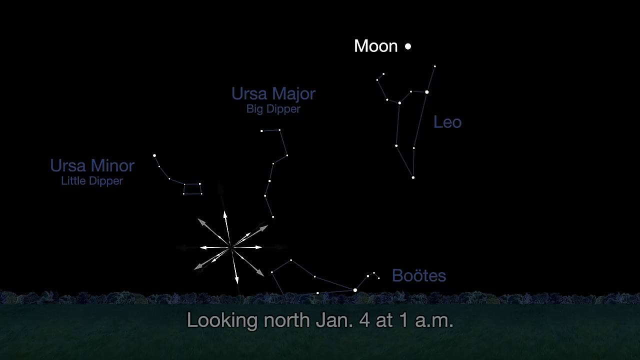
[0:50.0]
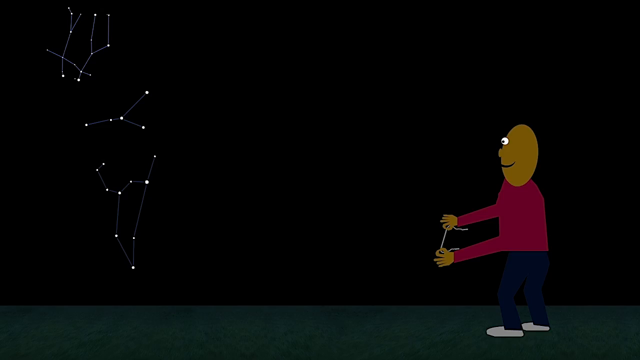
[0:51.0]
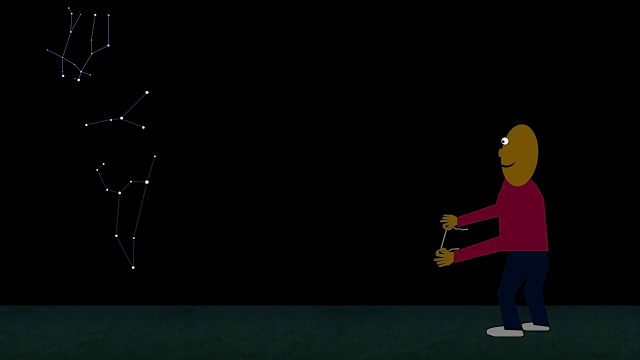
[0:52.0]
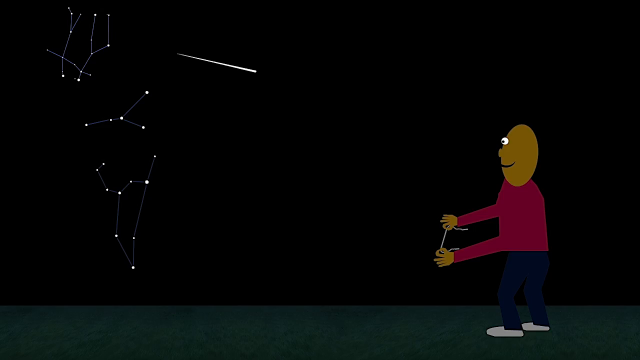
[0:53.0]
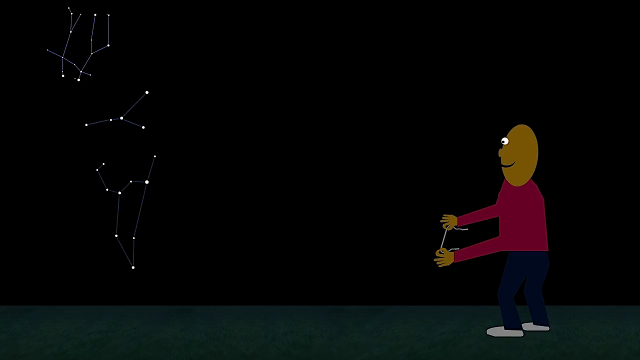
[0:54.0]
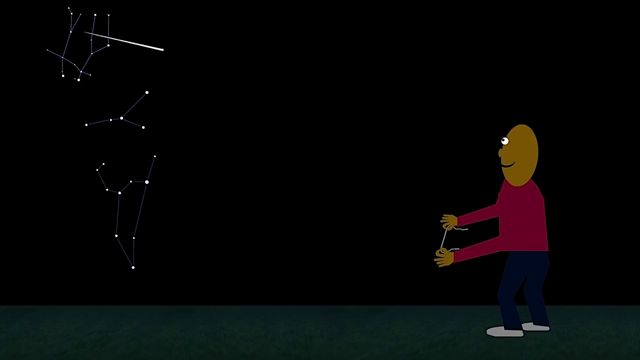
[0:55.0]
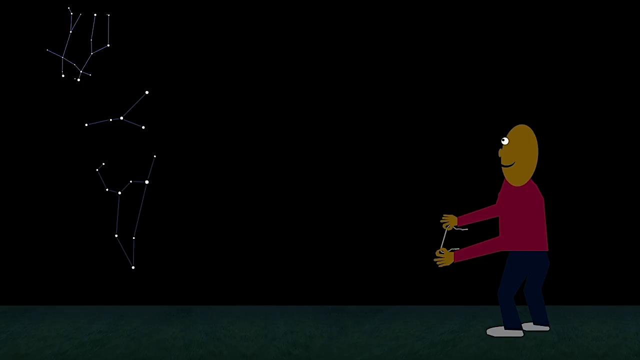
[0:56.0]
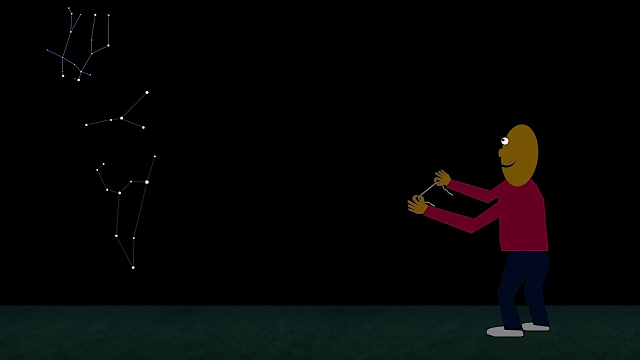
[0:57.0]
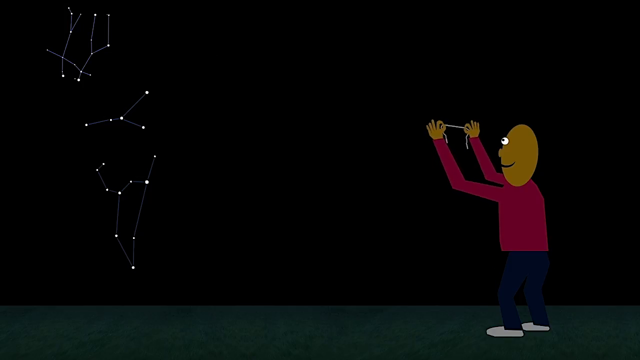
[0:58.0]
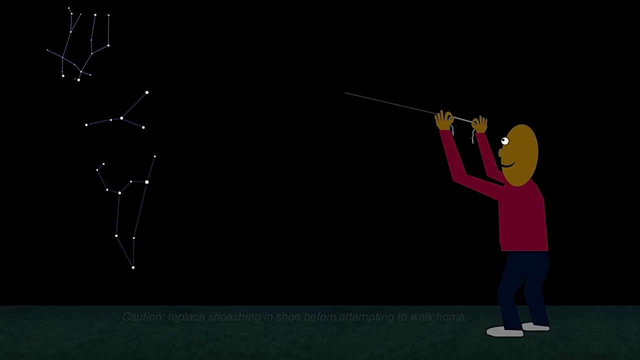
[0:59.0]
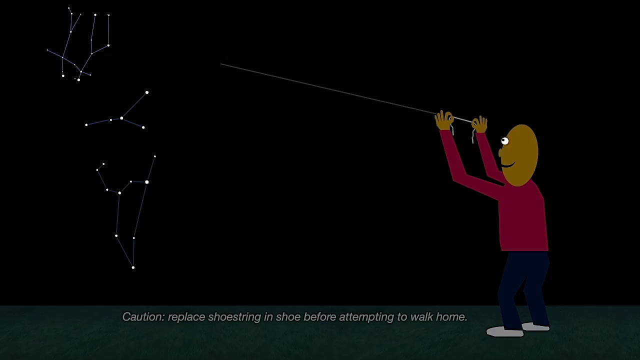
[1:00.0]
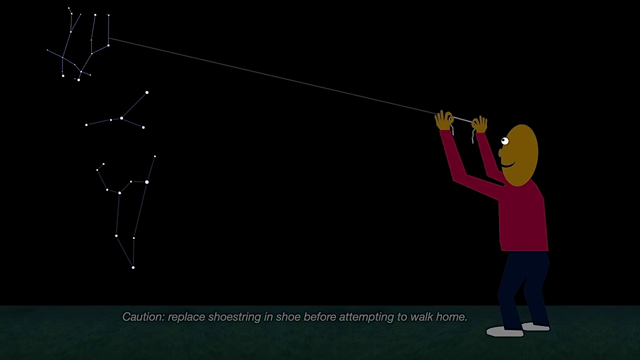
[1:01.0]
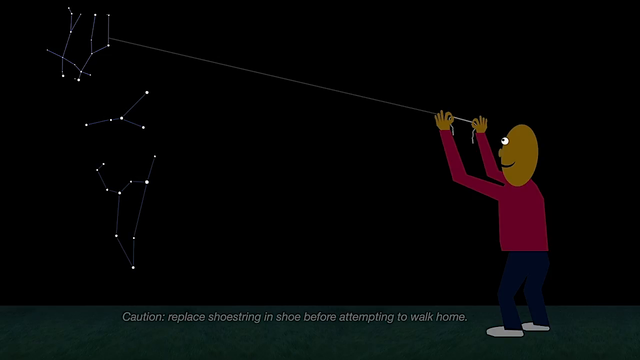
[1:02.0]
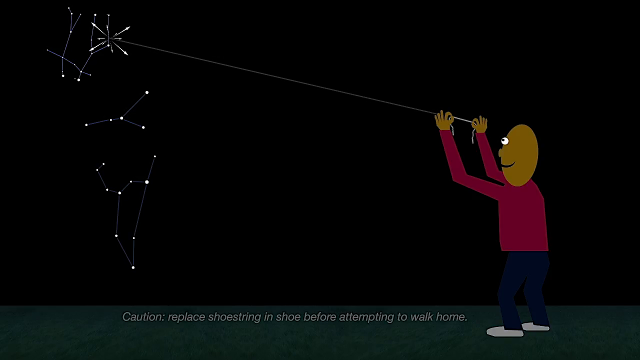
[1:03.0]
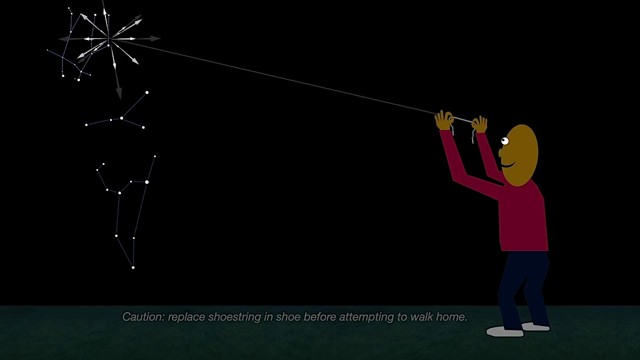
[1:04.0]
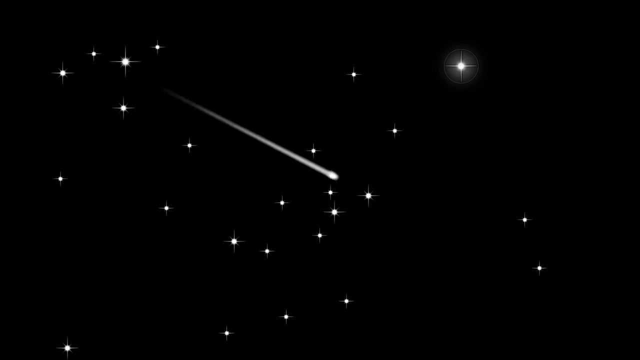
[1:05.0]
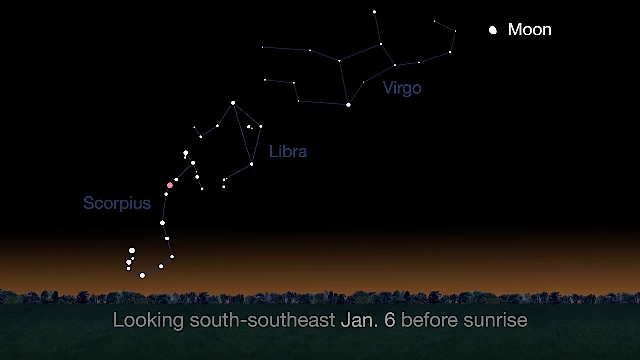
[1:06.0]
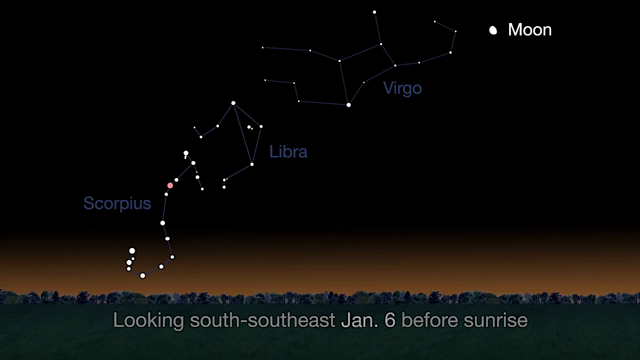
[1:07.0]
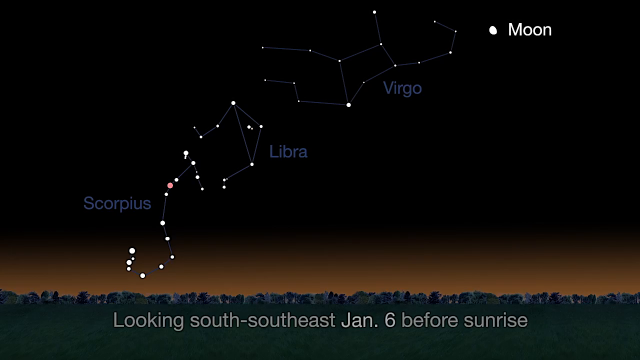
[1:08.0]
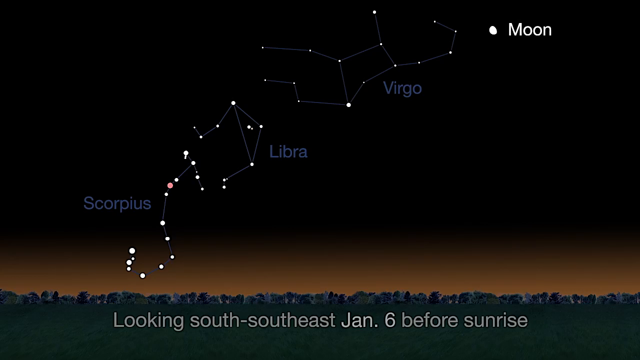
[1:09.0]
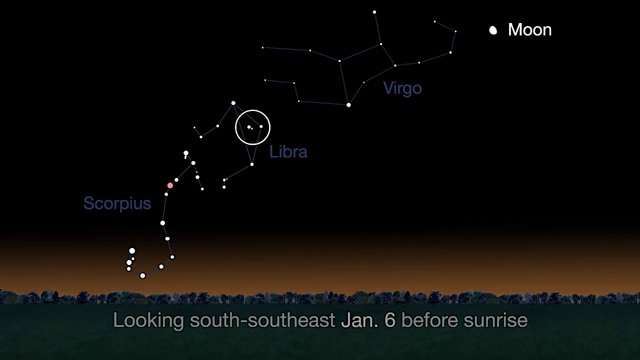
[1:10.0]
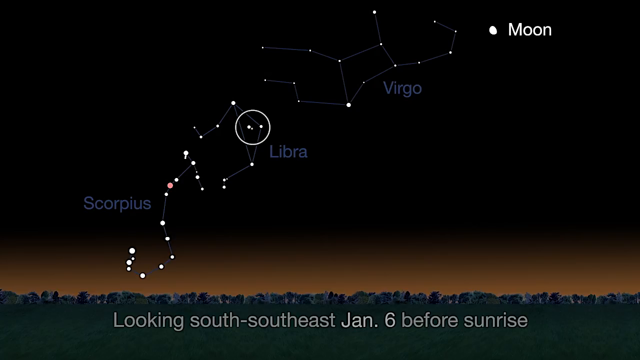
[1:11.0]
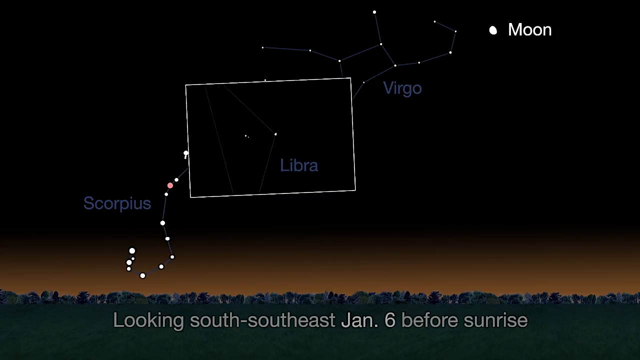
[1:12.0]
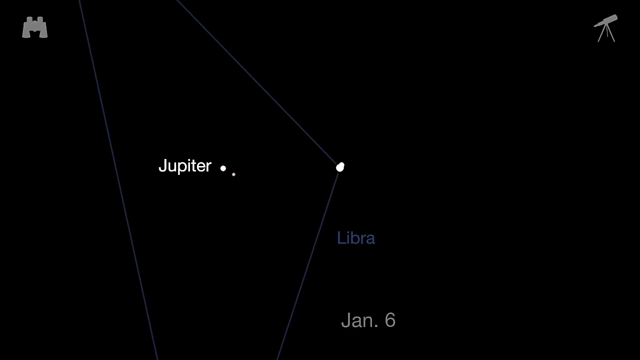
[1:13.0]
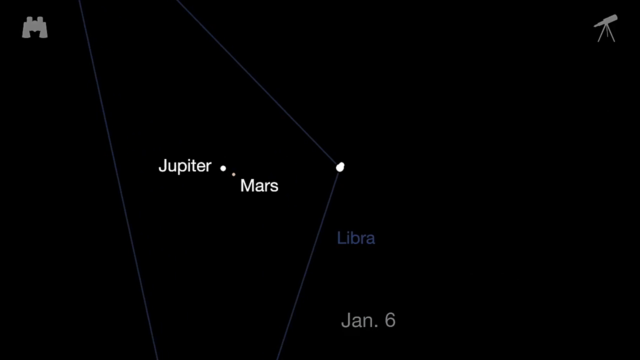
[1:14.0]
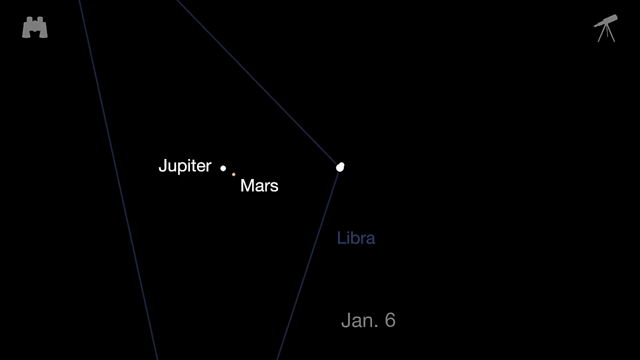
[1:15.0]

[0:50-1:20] The moon is in the upper right of the screen, with Leo just below it, Boötes below that, then Ursa Major, the Big Dipper, and Ursa Minor, the Little Dipper, plus a star pattern that looks like a starburst in the lower left. The next screen has a drawing of a human-like creature holding up a string in front of his eyes to look up into the sky, which helps him discover the different constellations. After that come Scorpius, Libra, and Virgo, with the moon in the upper right; two stars in Libra are circled with a white circle. The video then transitions to Jupiter with Mars right next to it, with the Libra constellation pattern going around Jupiter and Mars.